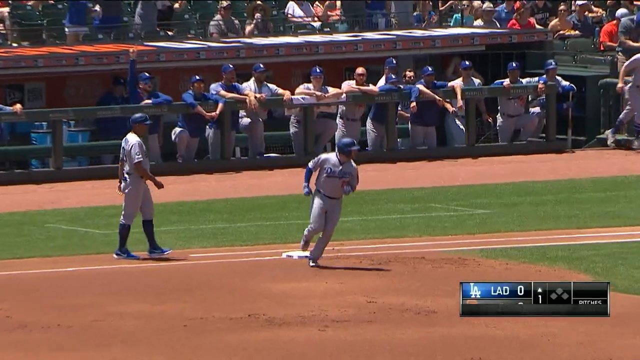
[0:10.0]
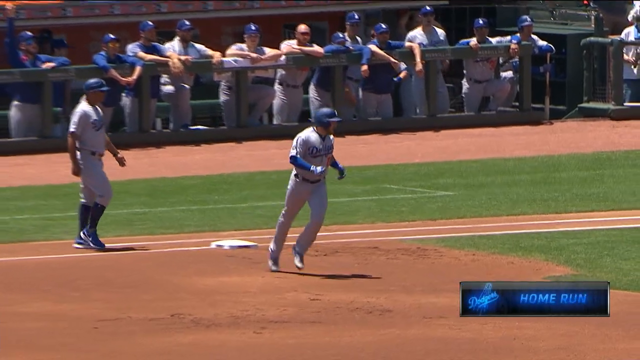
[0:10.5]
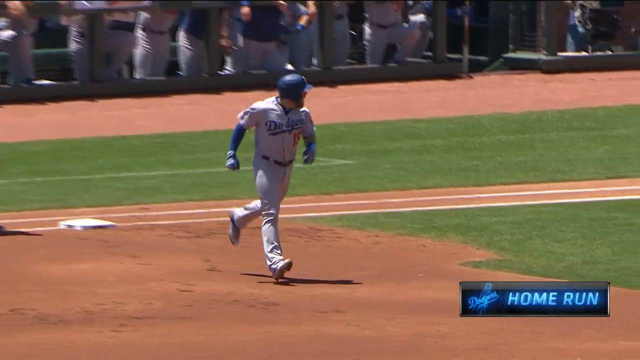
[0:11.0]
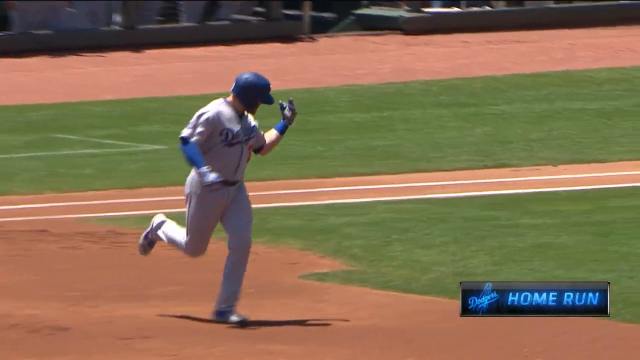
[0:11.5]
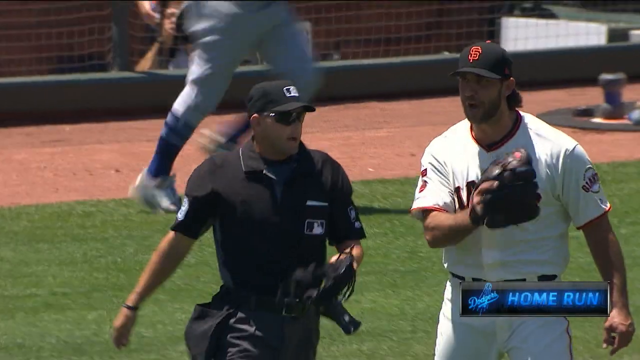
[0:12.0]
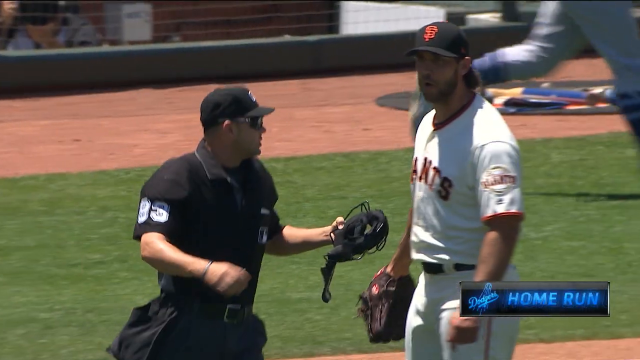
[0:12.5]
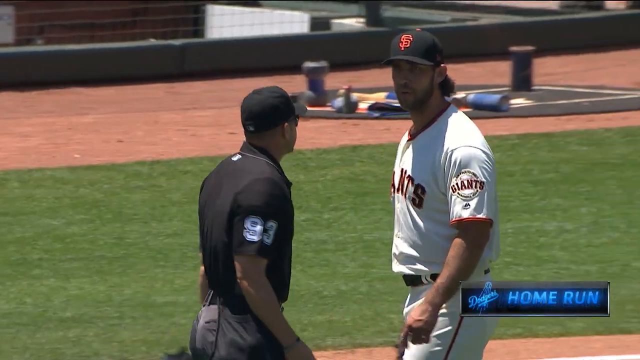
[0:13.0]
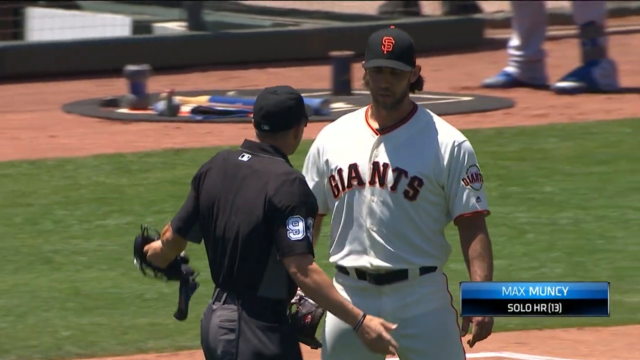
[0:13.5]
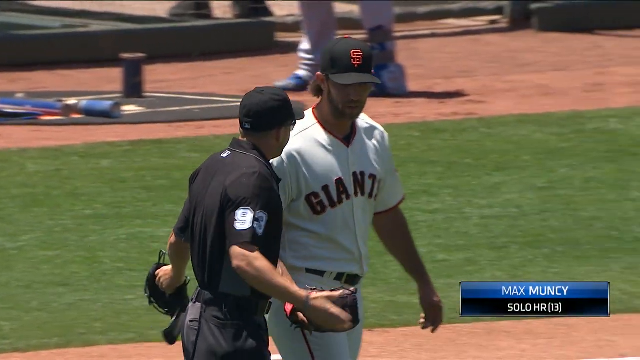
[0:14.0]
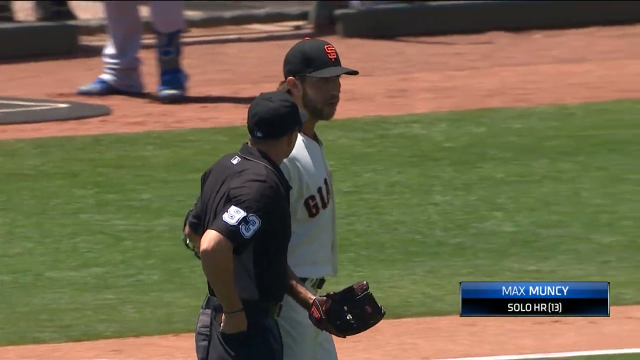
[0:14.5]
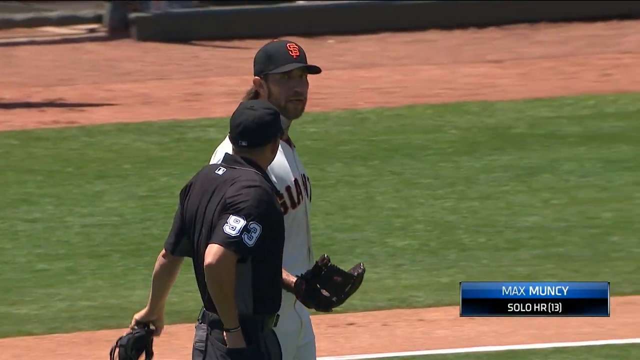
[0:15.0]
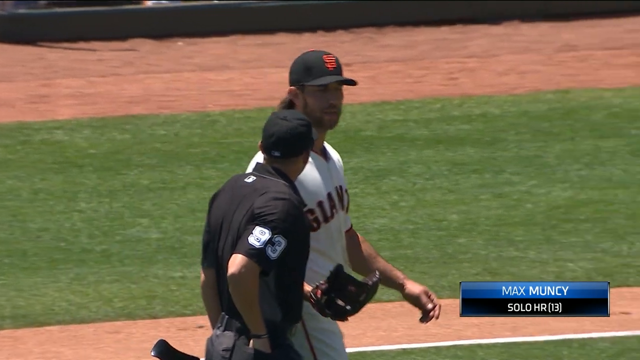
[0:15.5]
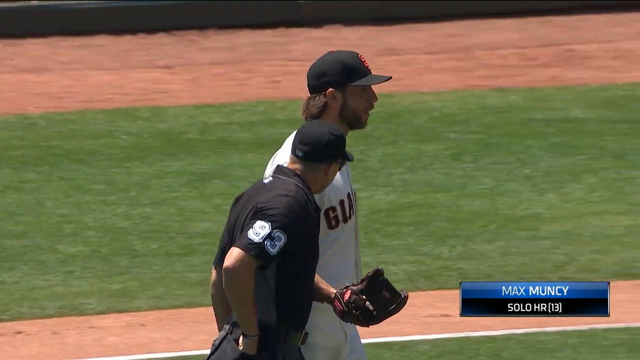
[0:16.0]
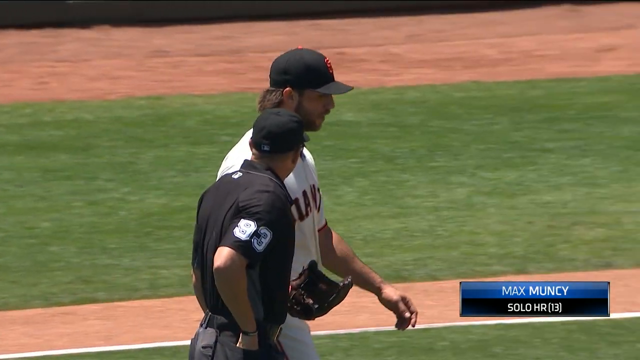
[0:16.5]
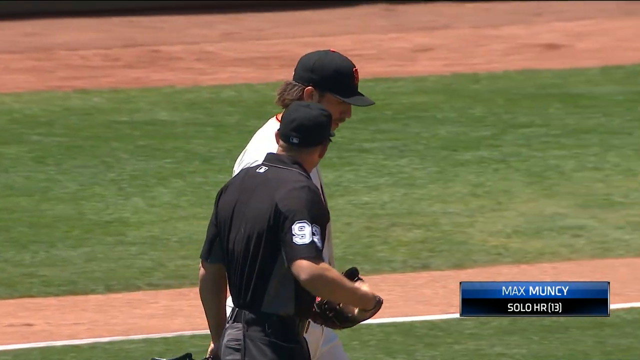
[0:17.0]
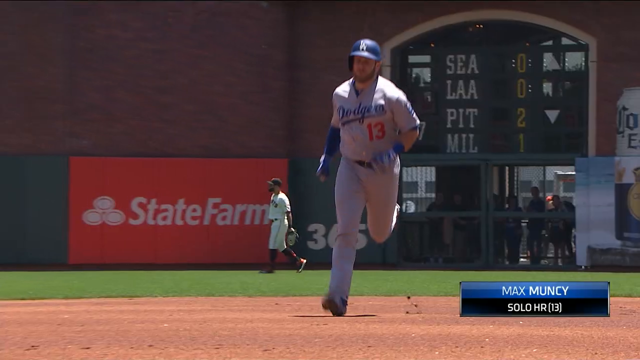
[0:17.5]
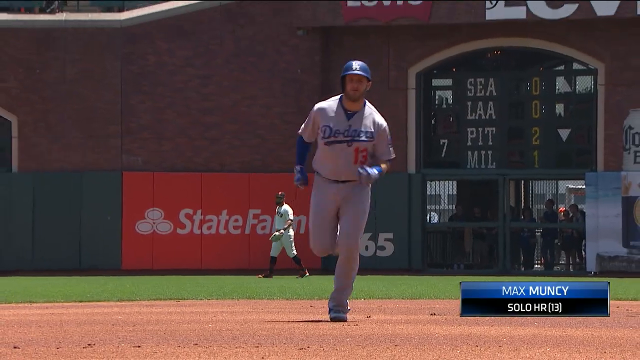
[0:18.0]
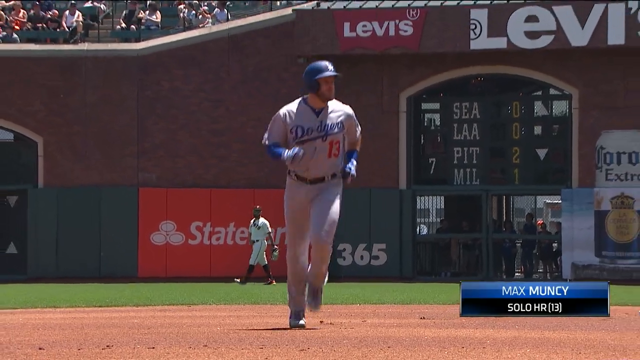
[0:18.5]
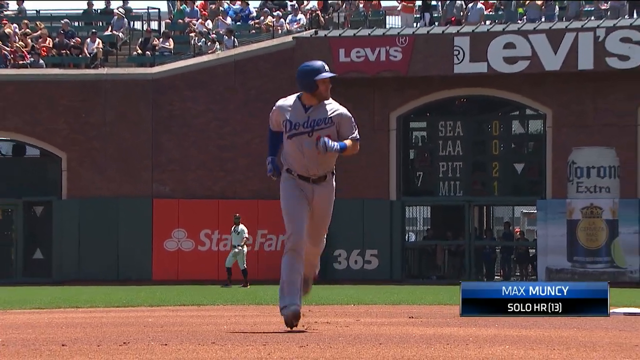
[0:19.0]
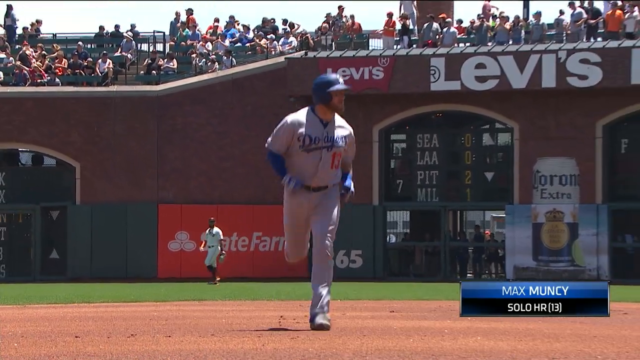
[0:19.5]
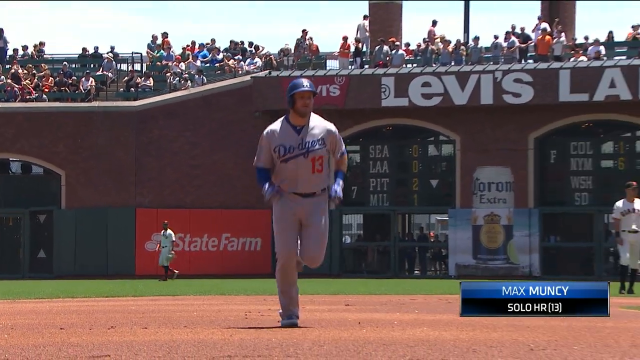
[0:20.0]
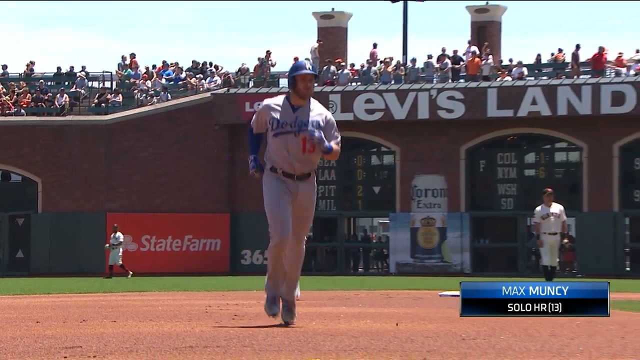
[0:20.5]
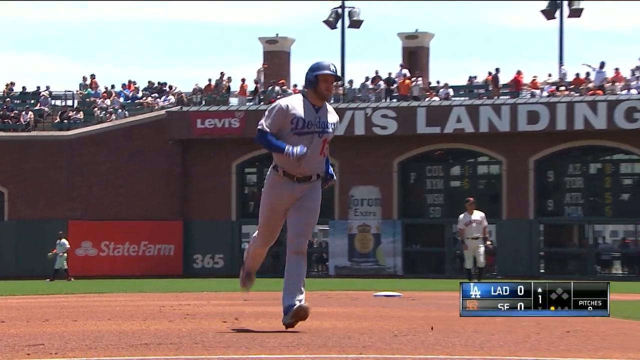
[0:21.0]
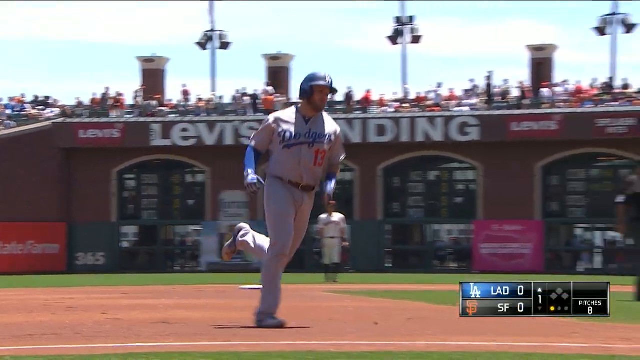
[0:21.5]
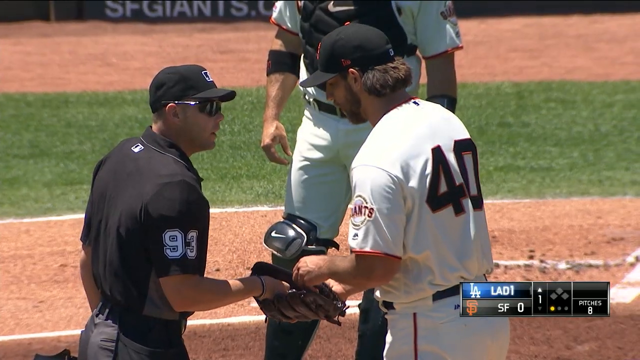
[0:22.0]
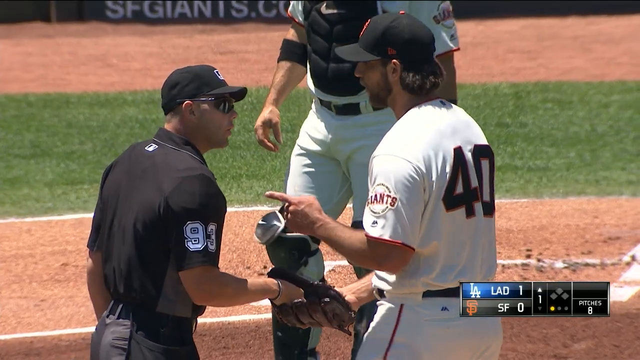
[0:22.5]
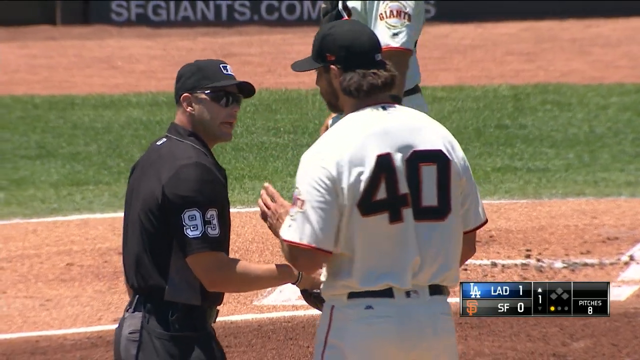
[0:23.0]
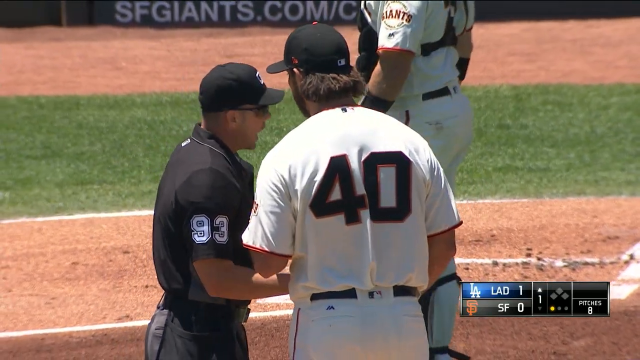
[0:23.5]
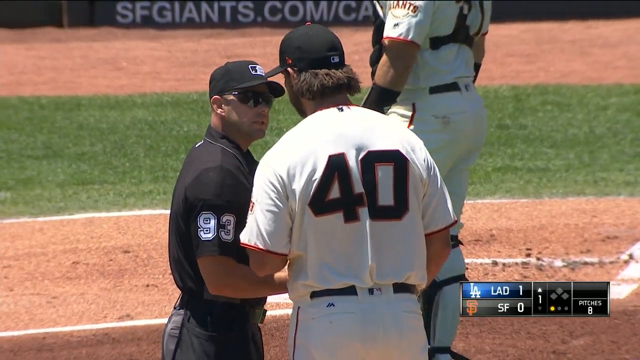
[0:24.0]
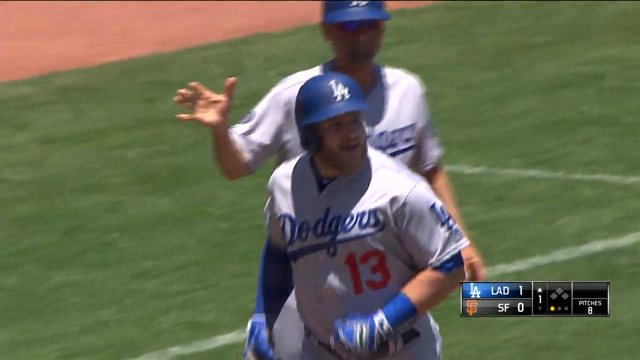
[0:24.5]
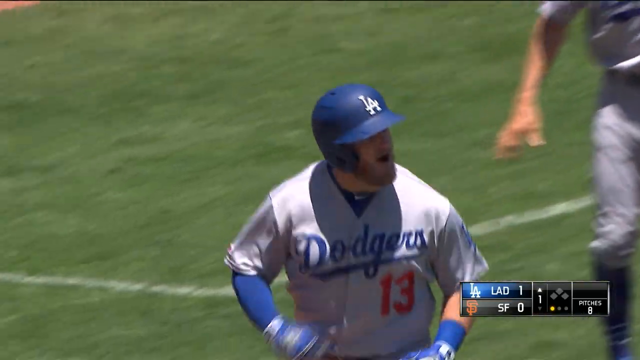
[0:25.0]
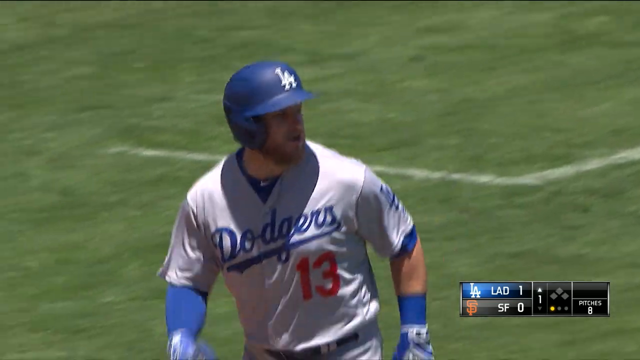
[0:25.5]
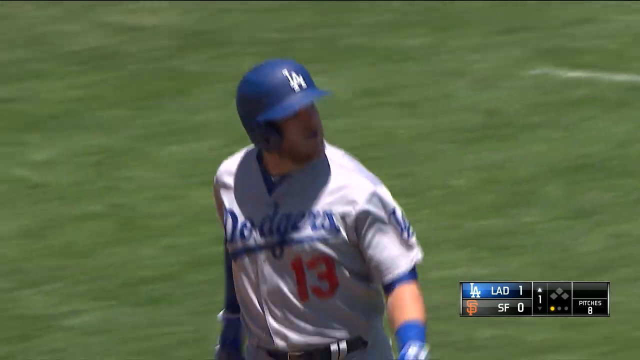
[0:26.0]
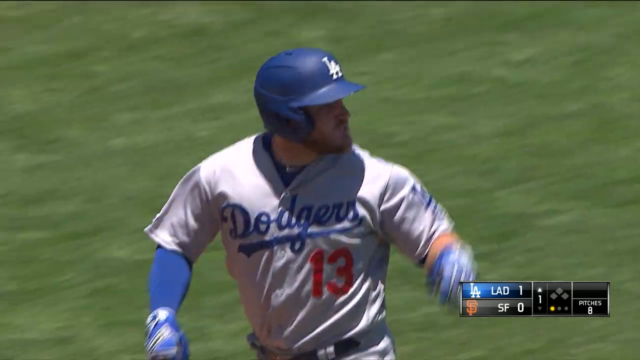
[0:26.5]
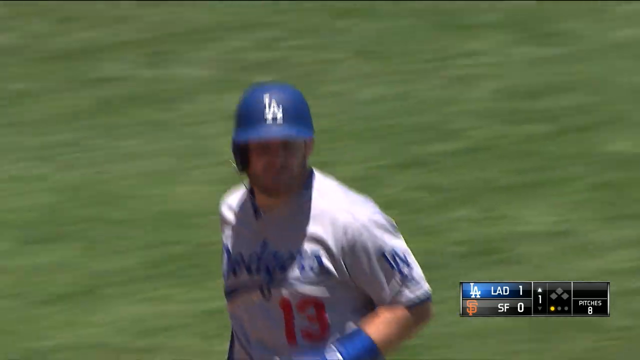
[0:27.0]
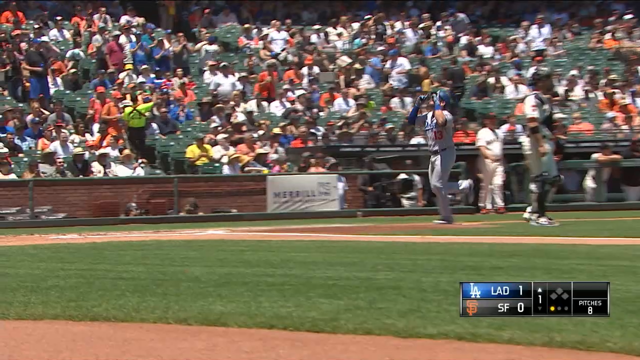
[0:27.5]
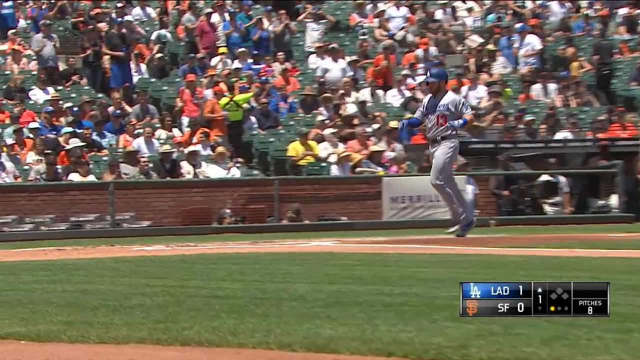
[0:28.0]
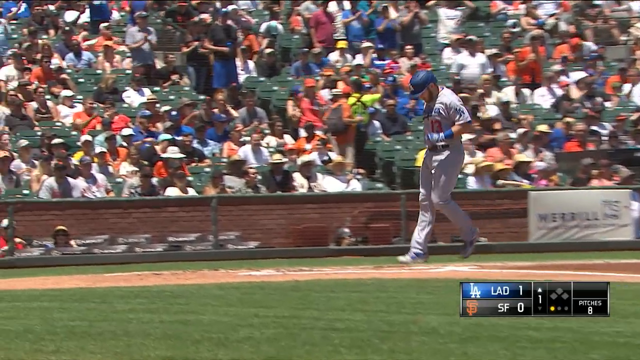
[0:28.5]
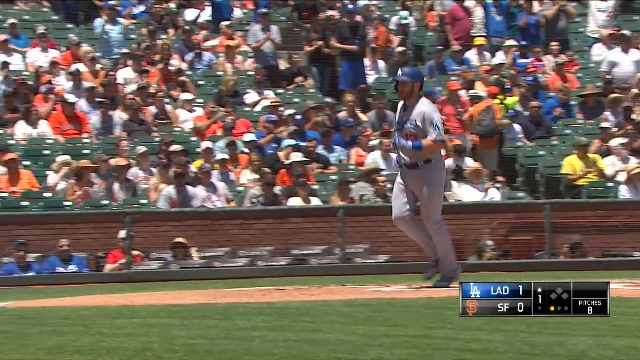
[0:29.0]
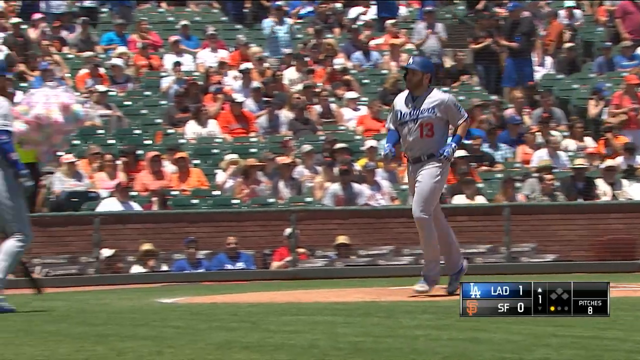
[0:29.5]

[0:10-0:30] Baseball players are on the green field. One runs the bases, apparently an LA Dodgers player, while a San Francisco player talks to an umpire, a person in black. In the bottom right corner, text reads "home run Max Muncy solo HR" and indicates 13 home runs; the teams shown are still the LA Dodgers and San Francisco. Number 13 runs around the bases, apparently Max, who hit the home run. The score is apparently LA 1, San Francisco 0. He wears a batter's helmet with one ear covered and one ear not. The umpire, apparently number 93, shown on his arm, in black and white, talks to San Francisco player number 40. The red dirt and the green field are visible.